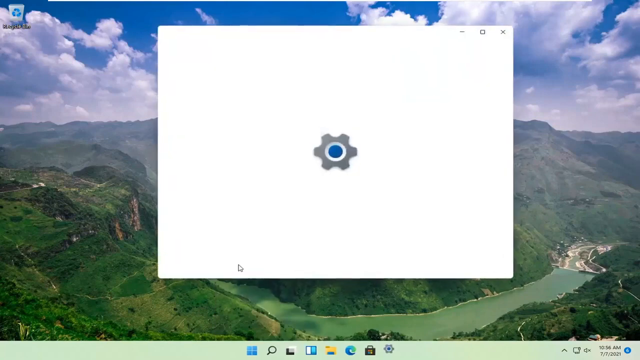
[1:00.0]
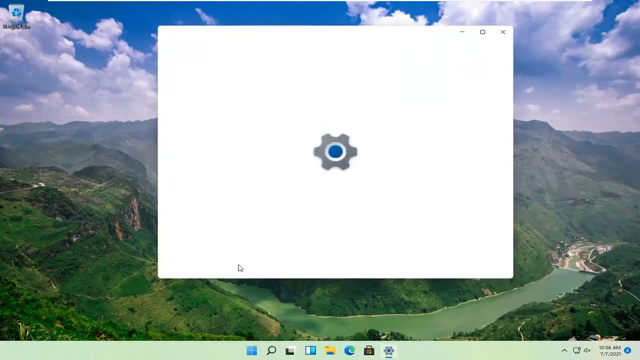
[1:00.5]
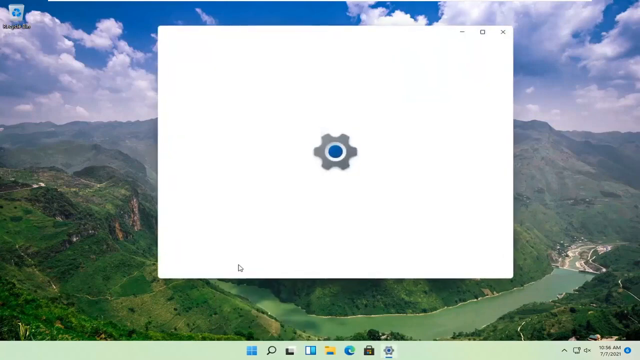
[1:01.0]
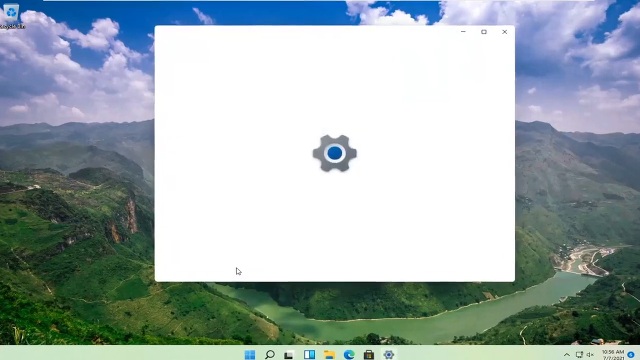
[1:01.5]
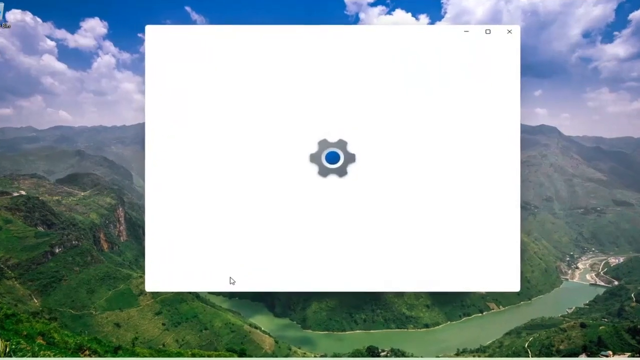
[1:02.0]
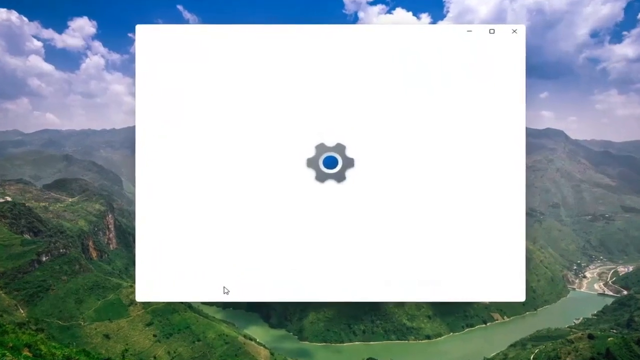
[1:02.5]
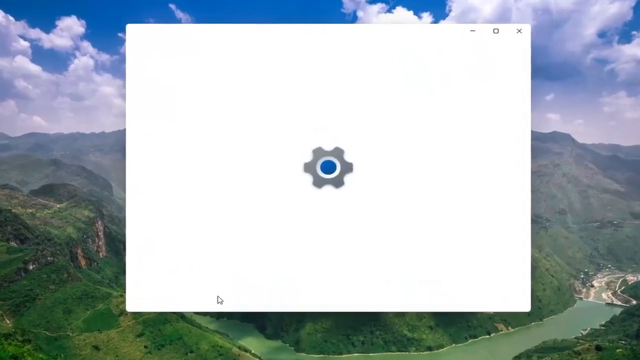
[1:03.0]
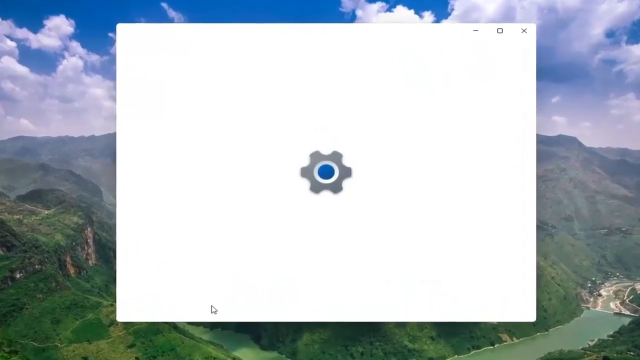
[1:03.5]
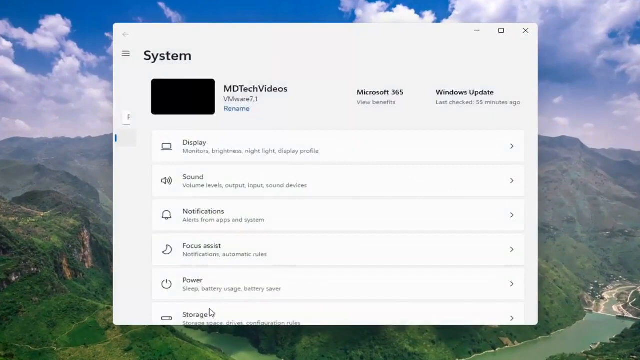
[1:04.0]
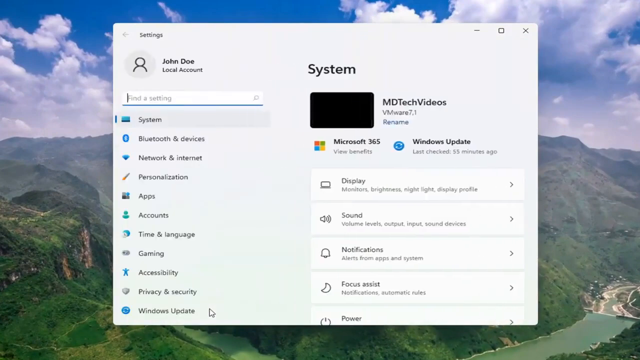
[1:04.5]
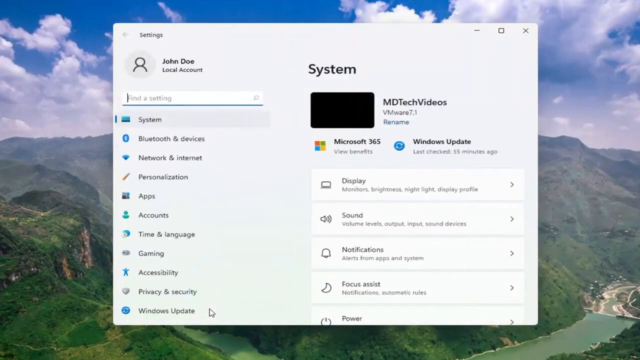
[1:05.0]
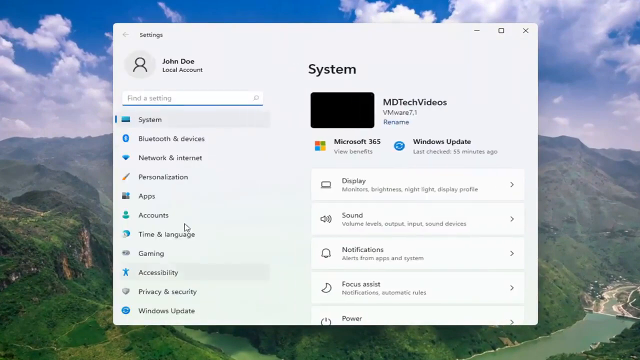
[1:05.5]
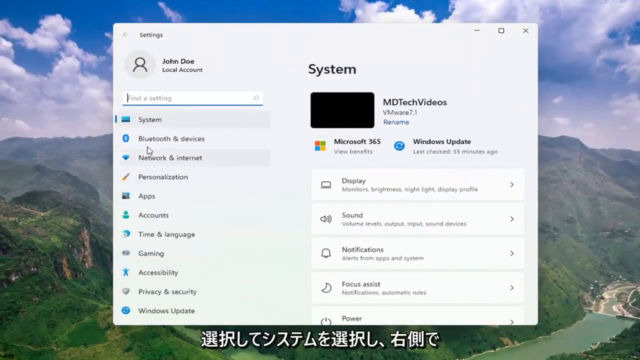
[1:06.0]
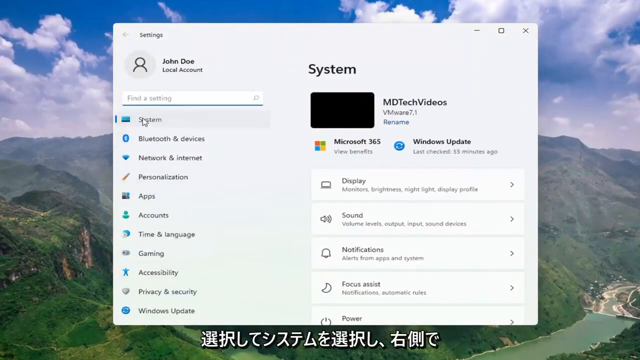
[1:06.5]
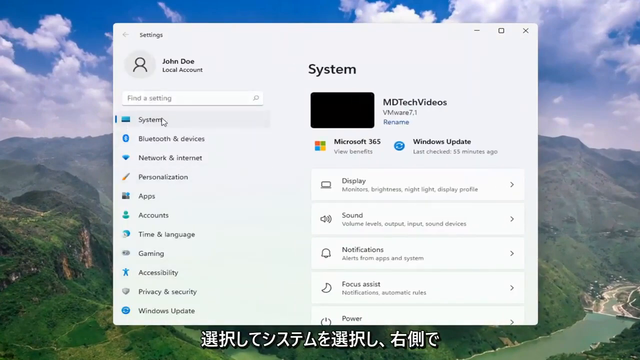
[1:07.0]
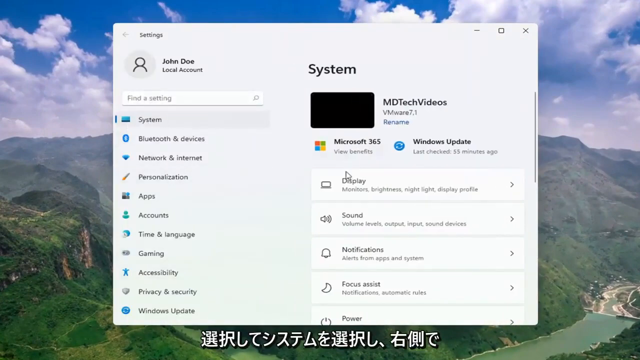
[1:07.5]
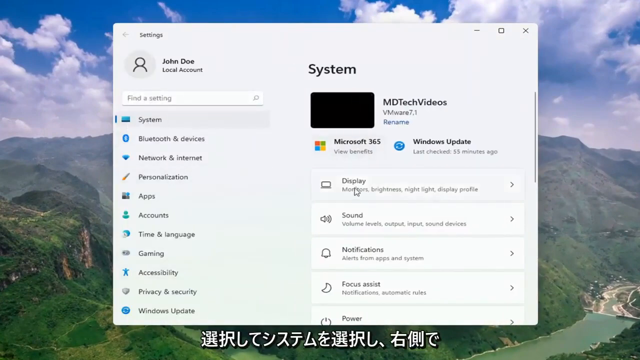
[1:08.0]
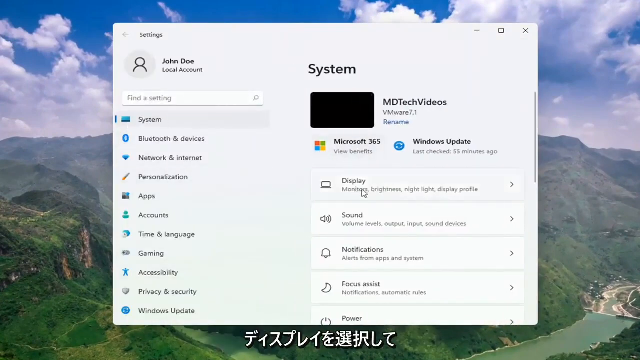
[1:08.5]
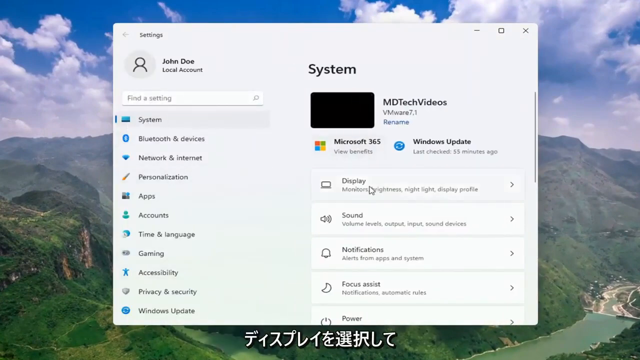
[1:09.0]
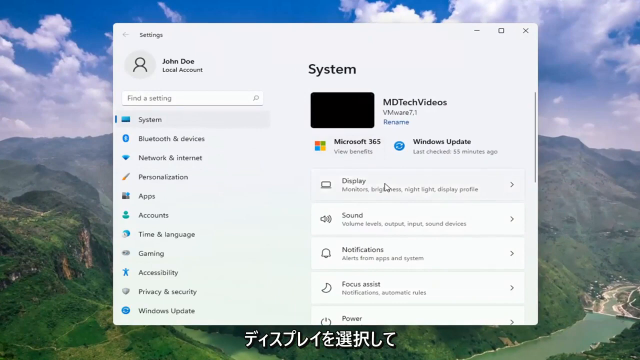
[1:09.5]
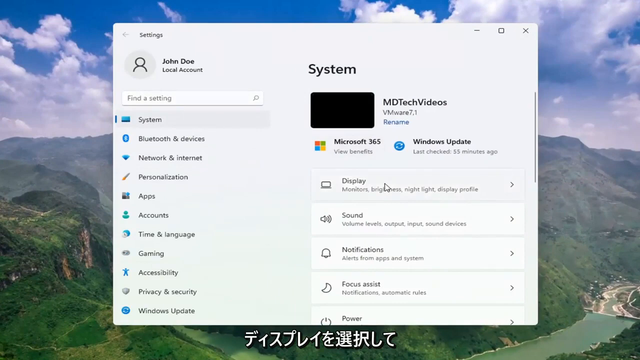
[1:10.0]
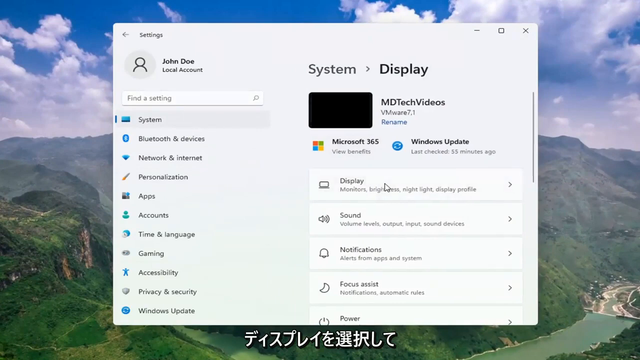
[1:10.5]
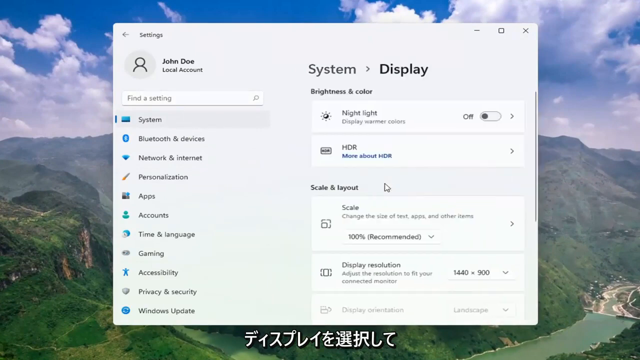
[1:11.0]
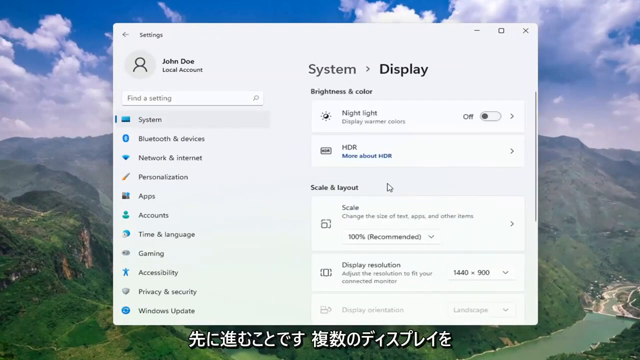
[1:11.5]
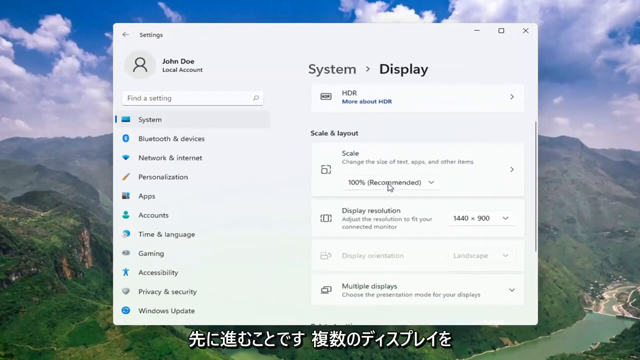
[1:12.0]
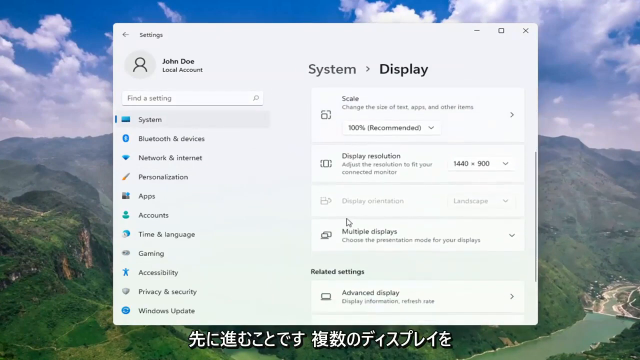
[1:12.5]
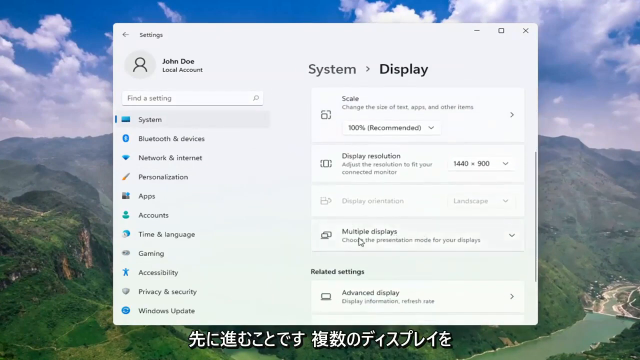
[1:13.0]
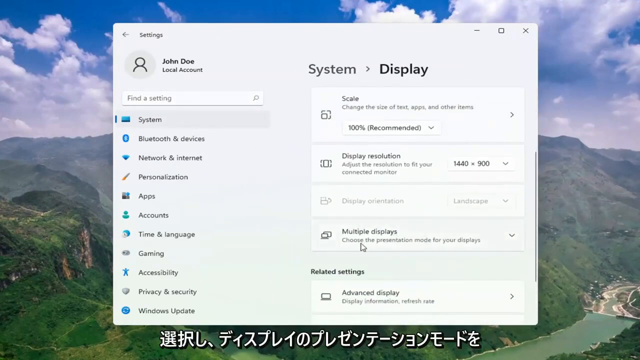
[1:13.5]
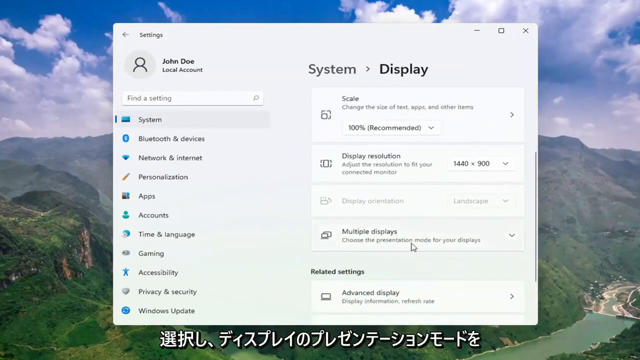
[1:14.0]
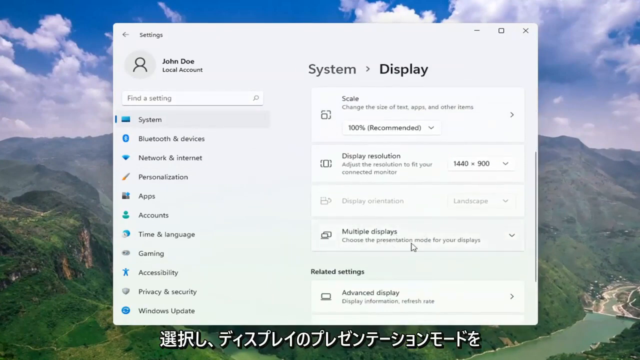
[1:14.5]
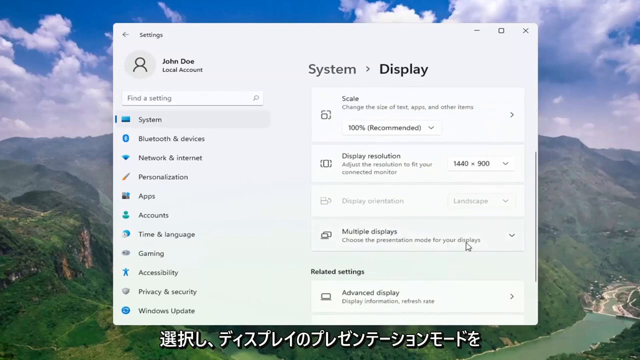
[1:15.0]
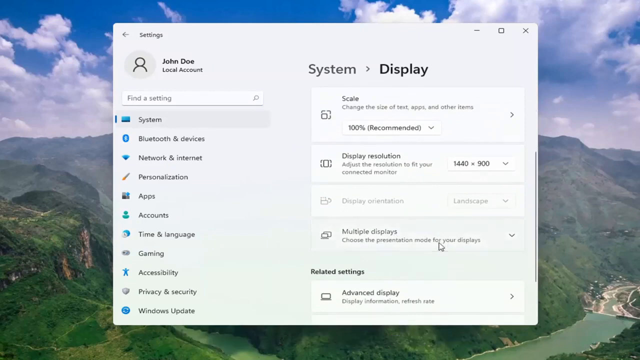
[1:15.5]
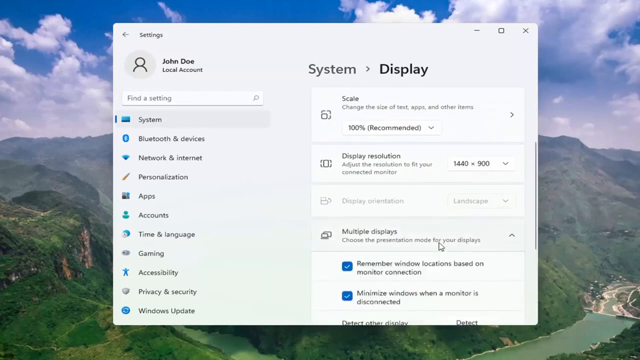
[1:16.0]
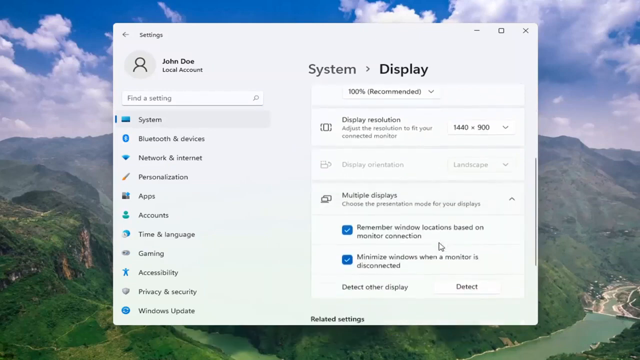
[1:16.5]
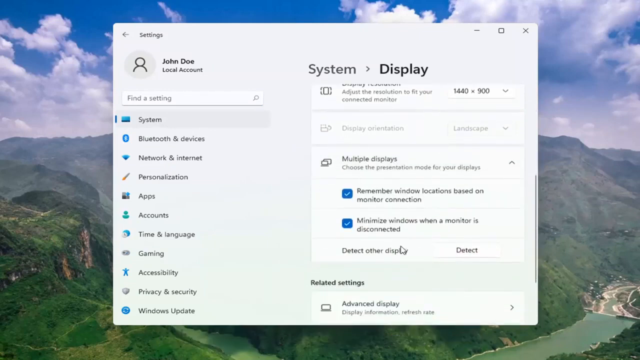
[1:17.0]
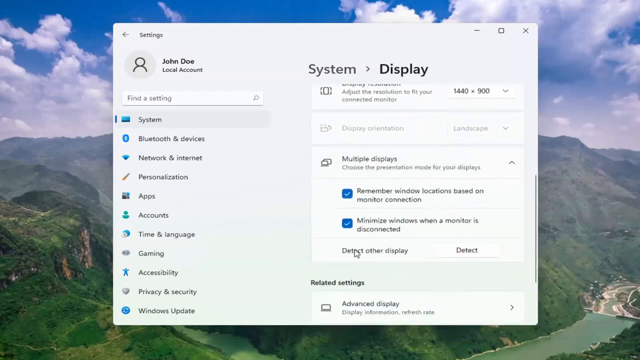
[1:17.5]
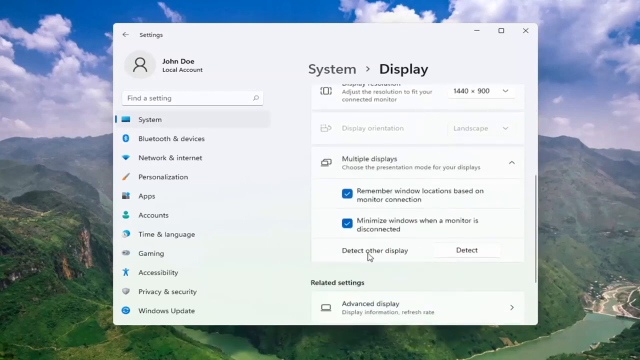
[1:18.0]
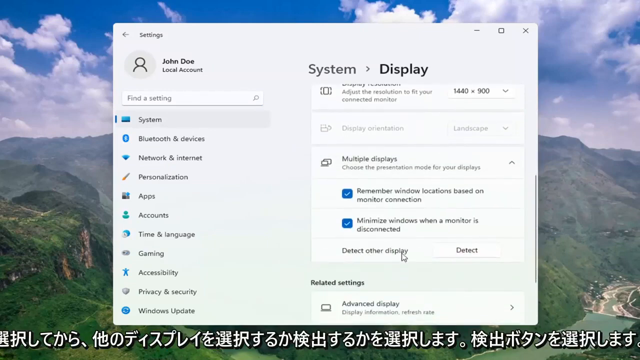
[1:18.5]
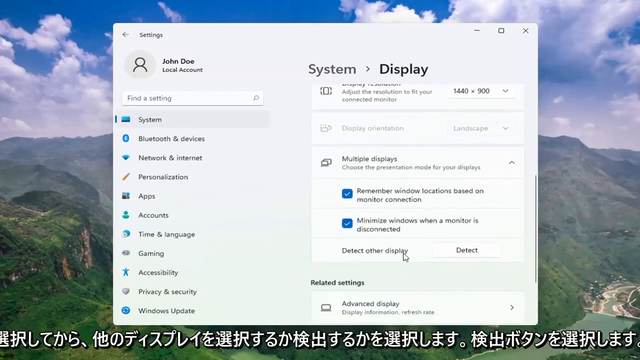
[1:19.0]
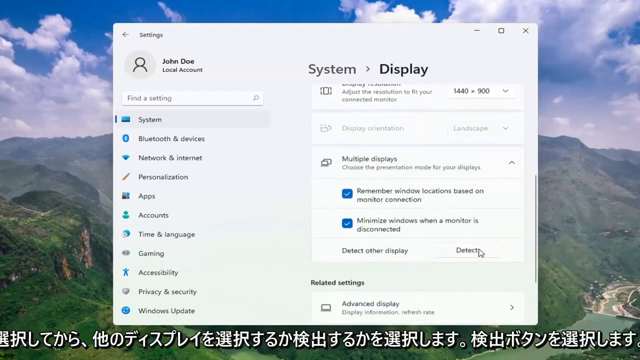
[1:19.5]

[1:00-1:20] A large white pop-up box covers most of the screen, showing the system option for the computer. Underneath the word "System" there is a black box, and next to that it says "MD Tech Videos", with a hyperlink that says "Rename". To the right of that it says "Microsoft 365", with "View Benefits" underneath, and further right it says "Windows Update, last checked 53 minutes ago". Multiple options can be chosen: "Display", "Sound", "Notifications", "Focus Assist", "Power", "Storage". The mouse is used to click on "System" on the left-hand side. A profile picture of an empty profile says "John Doe". Another list on the left-hand side includes "Bluetooth and devices", "network and internet", "personalization", "apps", "accounts", "time and language", "gaming", "accessibility", "privacy and security", and more.